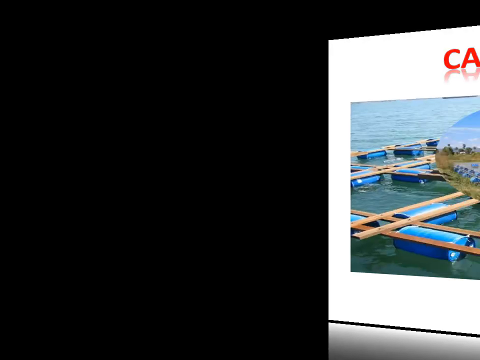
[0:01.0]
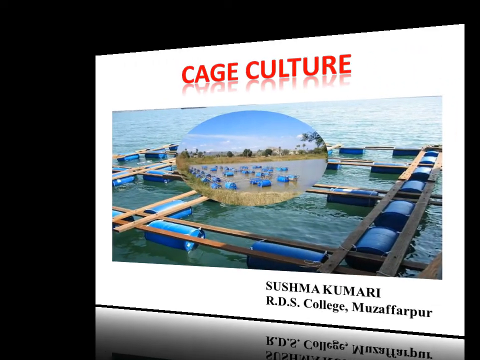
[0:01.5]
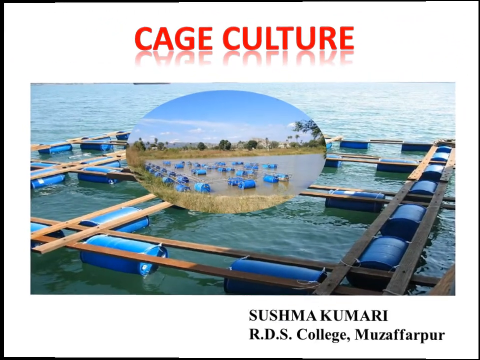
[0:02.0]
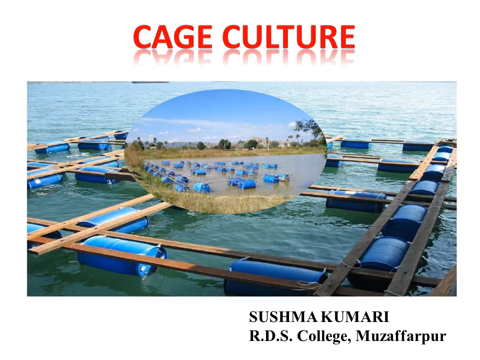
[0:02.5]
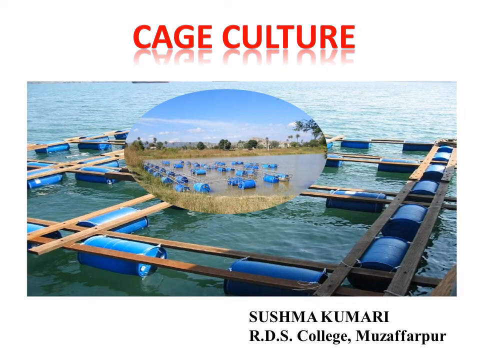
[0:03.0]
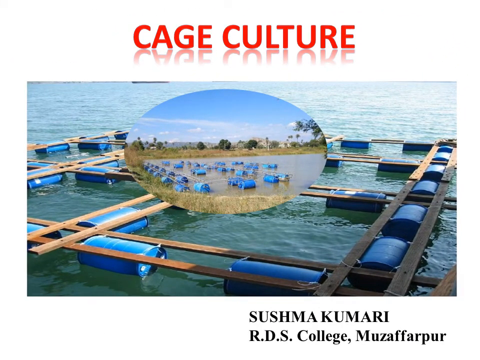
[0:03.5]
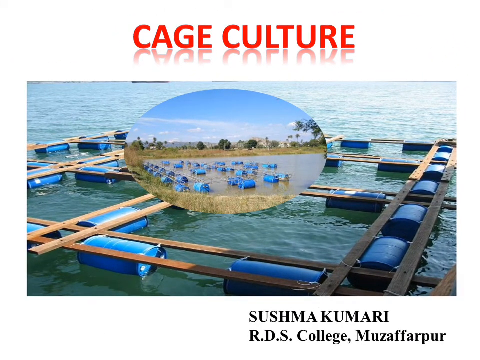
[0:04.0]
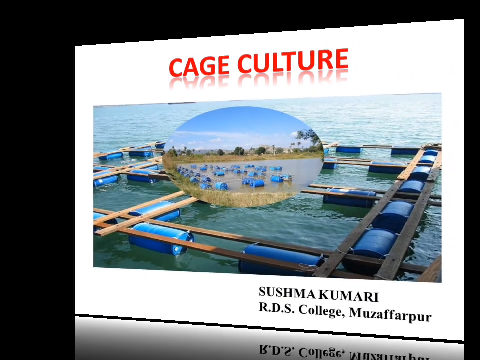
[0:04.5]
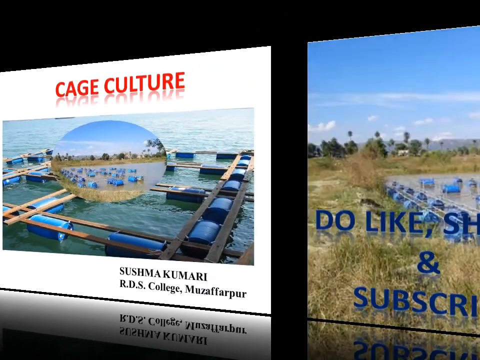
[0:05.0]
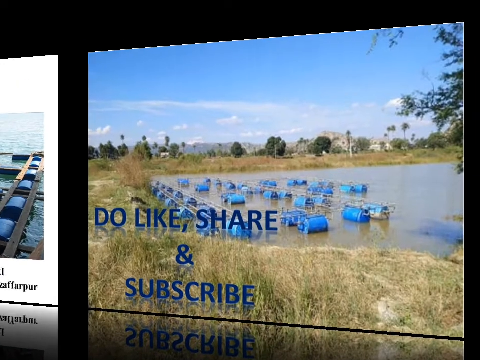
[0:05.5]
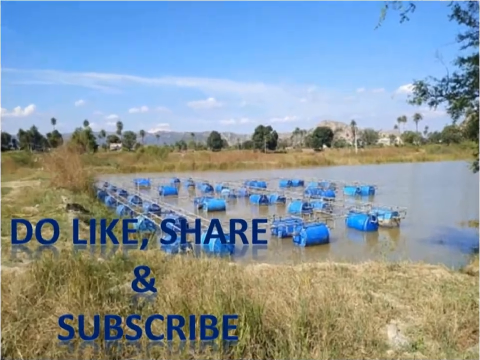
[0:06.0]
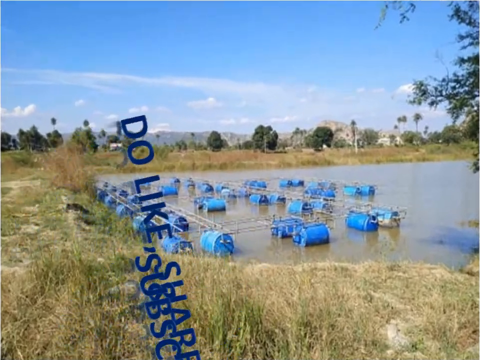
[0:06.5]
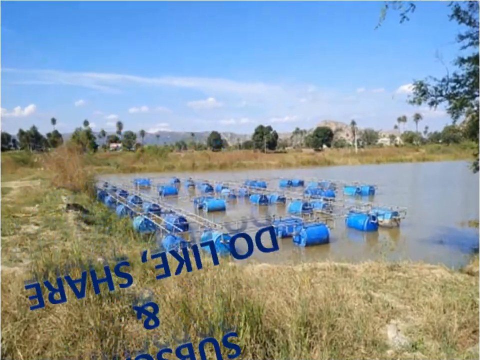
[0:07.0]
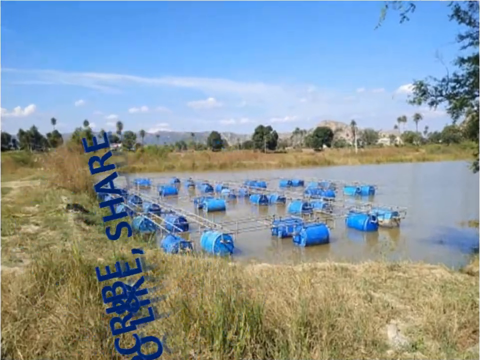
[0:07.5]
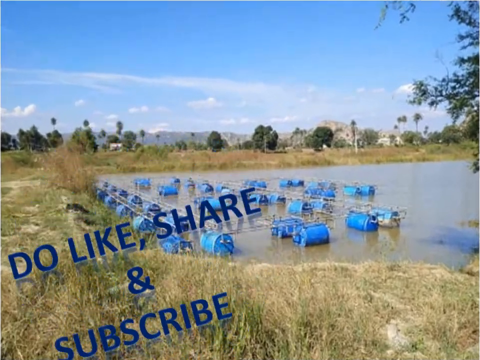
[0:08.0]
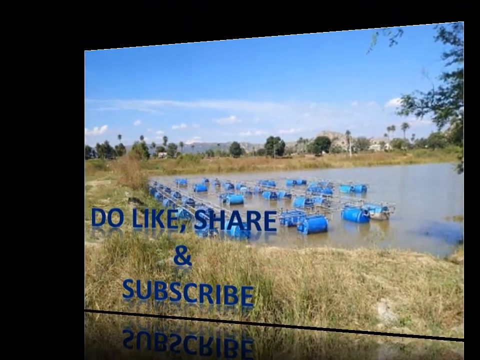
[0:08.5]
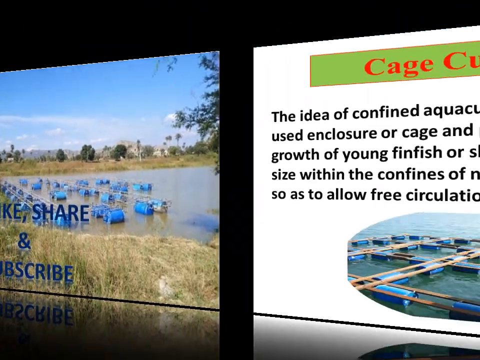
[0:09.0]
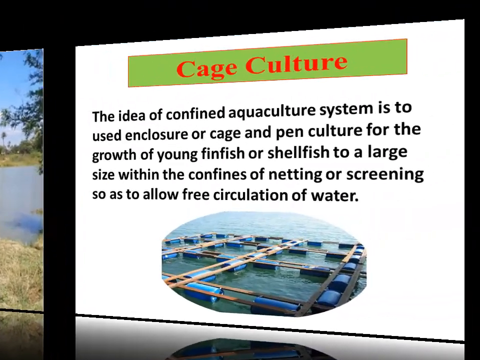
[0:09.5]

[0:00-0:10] An image shows a body of water on which various large blue drums or barrels, evidently filled with air, float. Arranged on top of them, in some sort of square grid, are planks on either side of the drums, forming a sort of walkway, with square open spaces in between. A name at the bottom of the image reads "Sushma Kumari, RDS College, Muzaffarpur." Next, another image of the body of water shows that it looks like it could be a lake or a large pond, surrounded on the embankment by some grass. Along one edge, the barrels float with pieces of planks across them as walkways. Writing on the left of the screen says "do like, share, and subscribe."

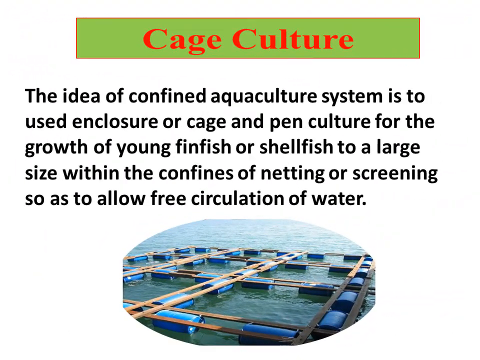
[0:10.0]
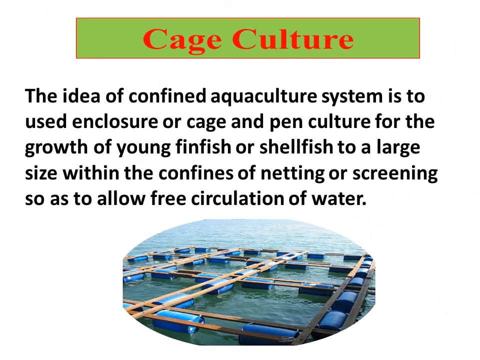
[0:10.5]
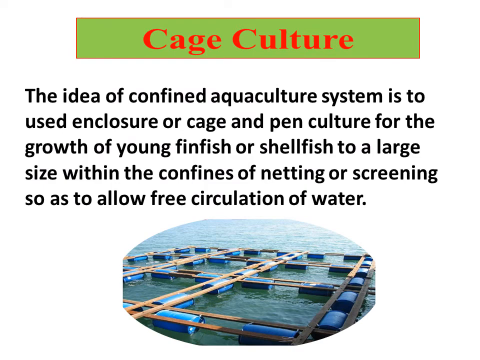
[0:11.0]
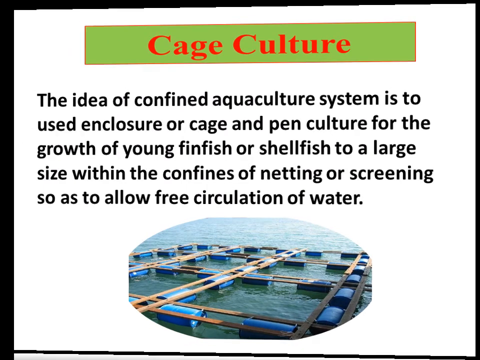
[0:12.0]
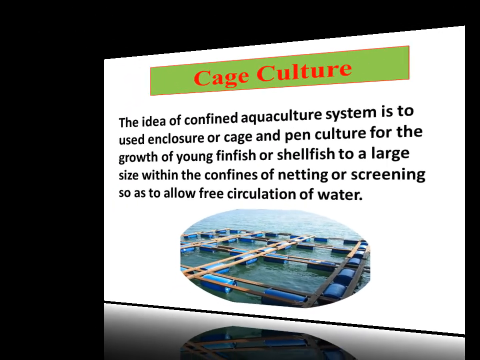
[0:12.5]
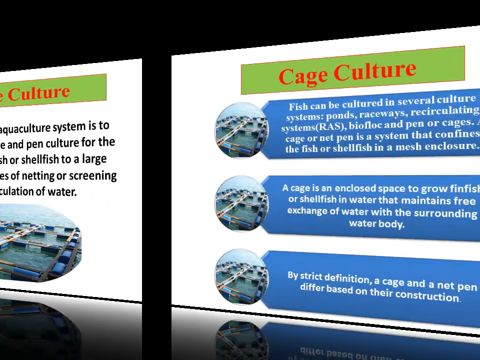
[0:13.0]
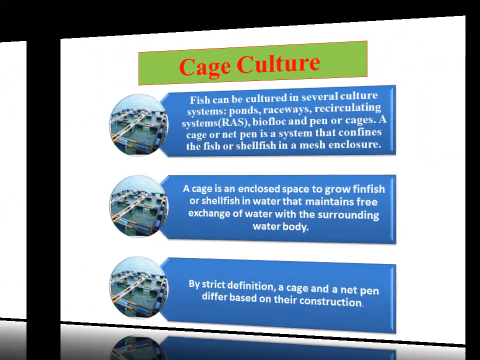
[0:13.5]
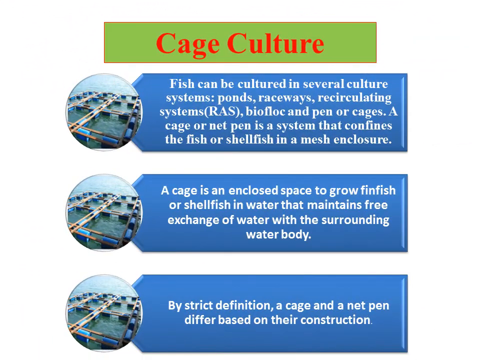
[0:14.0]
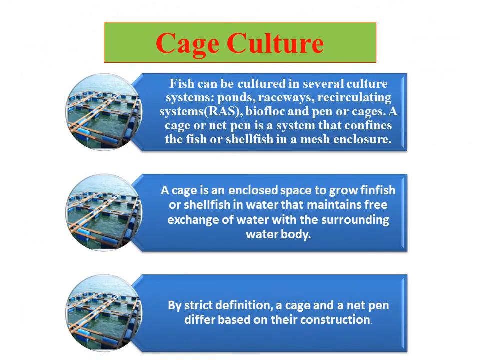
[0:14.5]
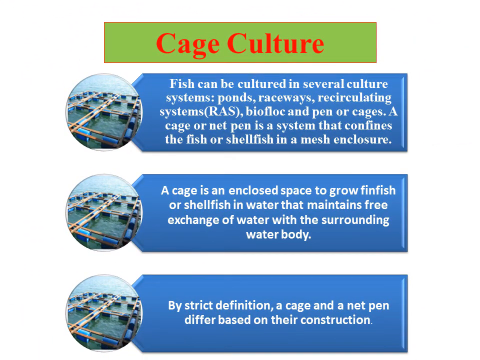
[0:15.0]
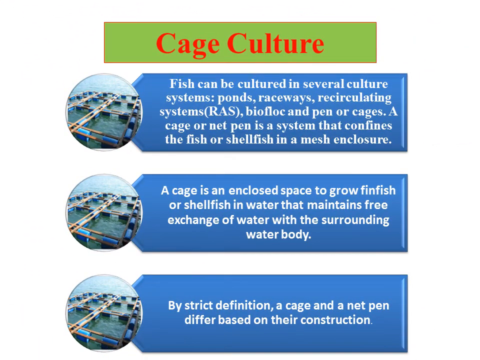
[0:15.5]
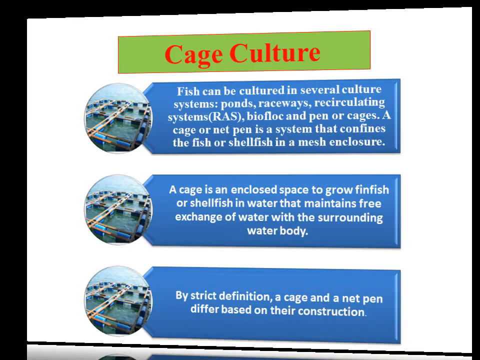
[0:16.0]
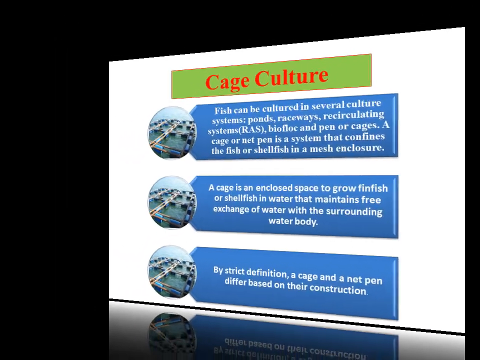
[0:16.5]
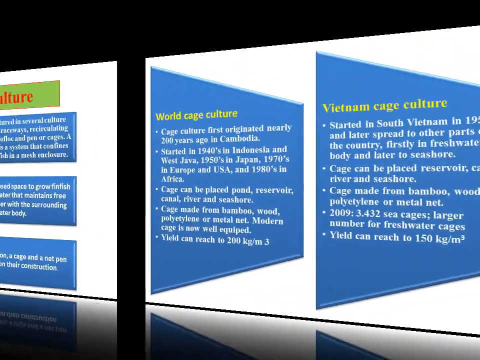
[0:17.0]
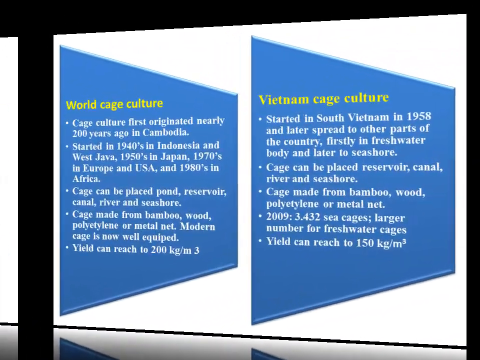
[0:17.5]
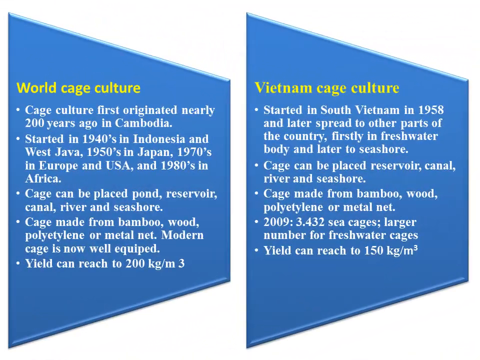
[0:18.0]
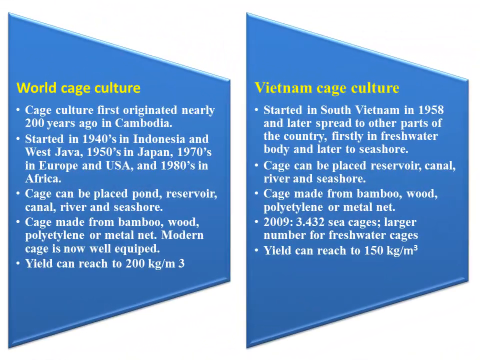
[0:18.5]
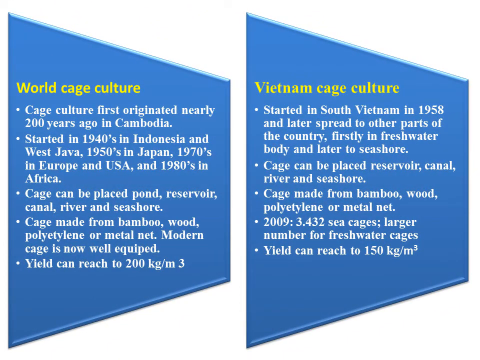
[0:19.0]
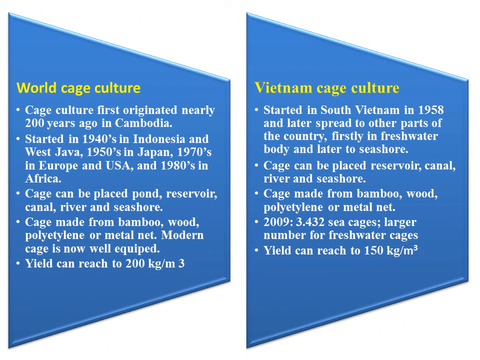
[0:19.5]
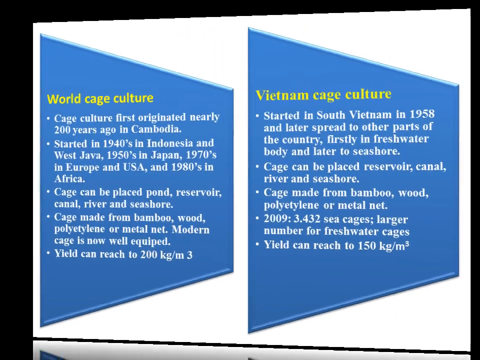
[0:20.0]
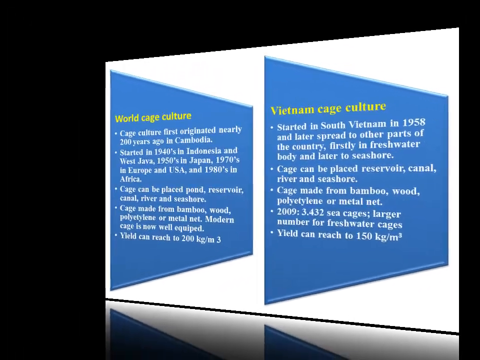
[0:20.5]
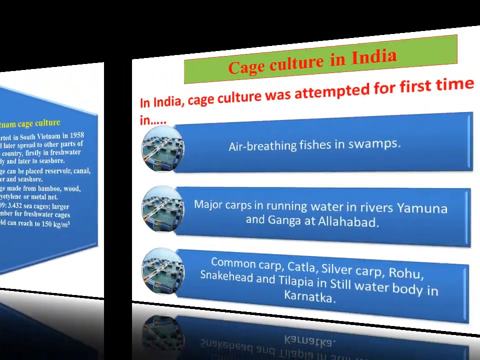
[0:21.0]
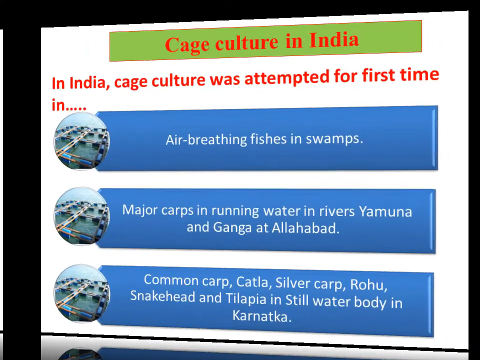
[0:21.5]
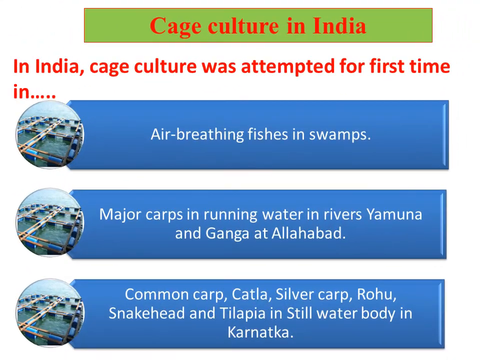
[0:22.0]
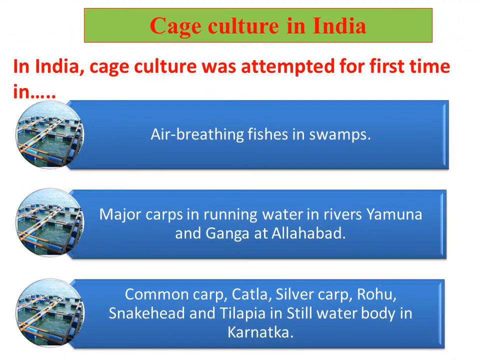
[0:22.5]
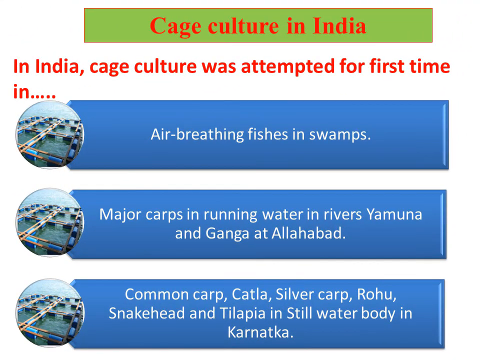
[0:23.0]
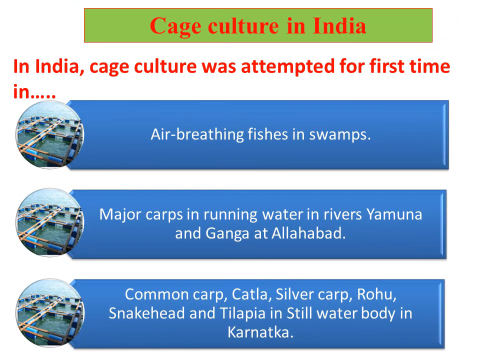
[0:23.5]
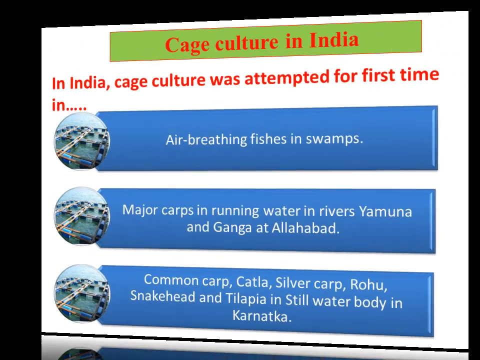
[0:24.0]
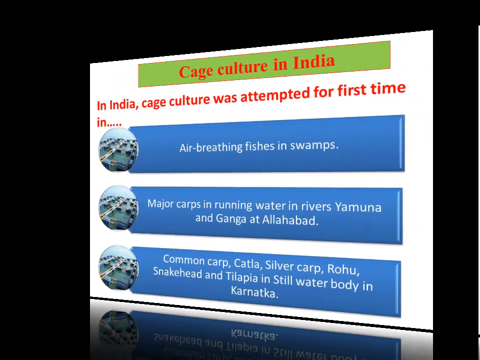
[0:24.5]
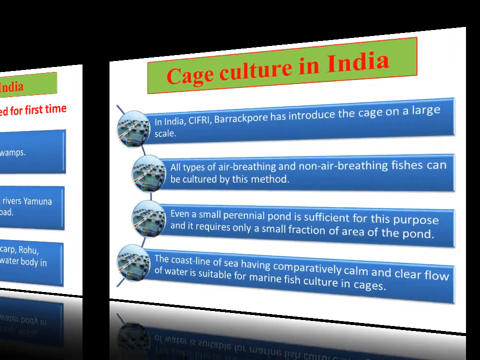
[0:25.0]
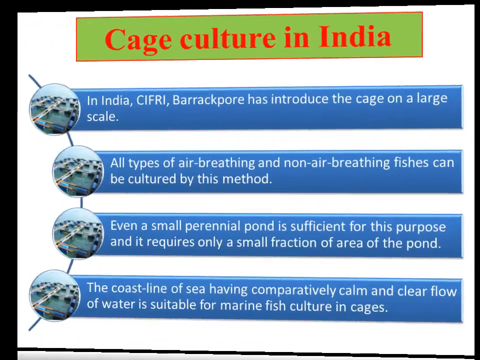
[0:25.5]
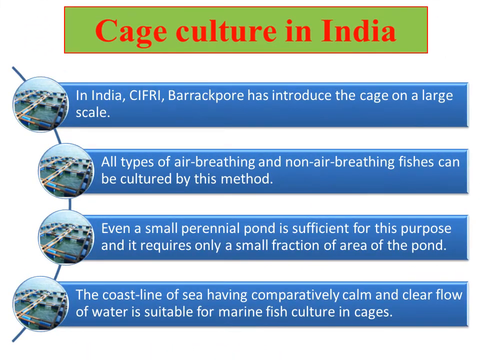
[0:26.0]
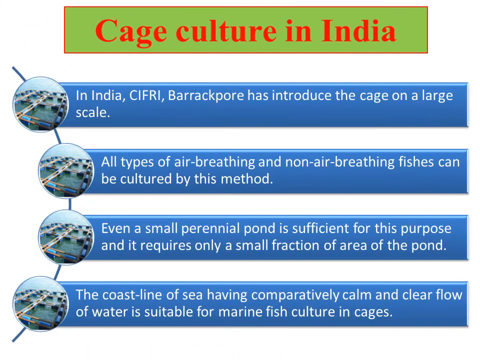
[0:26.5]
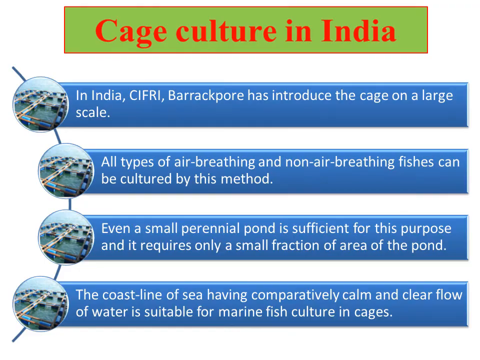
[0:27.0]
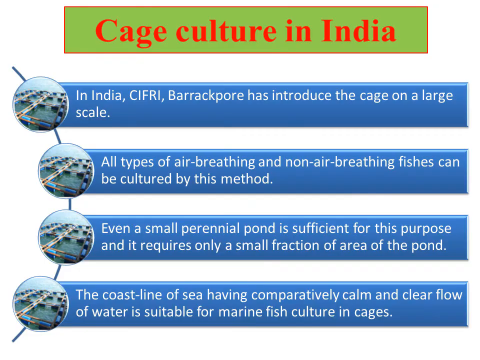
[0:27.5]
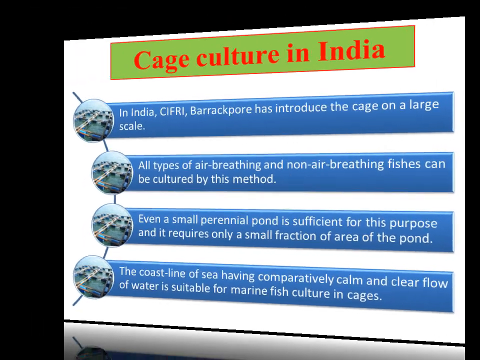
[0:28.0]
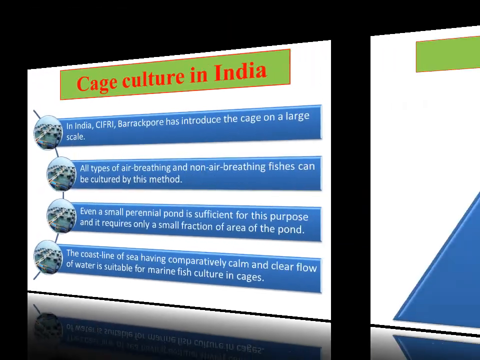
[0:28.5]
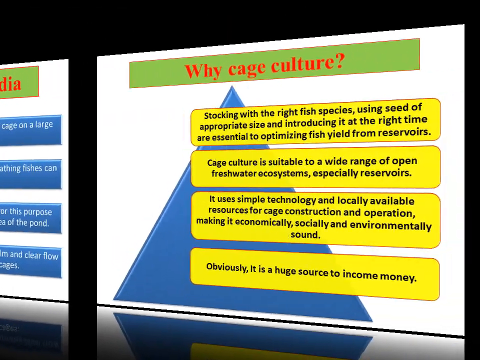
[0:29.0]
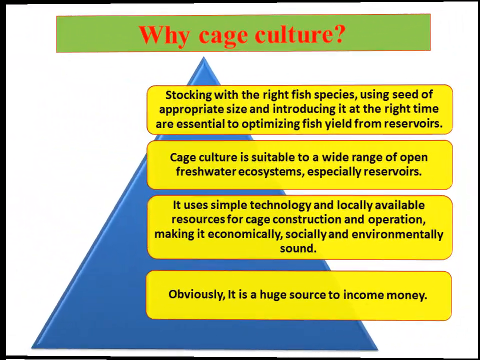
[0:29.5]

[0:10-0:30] Text explains that the idea of a confined aquaculture system is to use an enclosure, cage or pen culture to grow young fish to a large size within the confines of netting or screening so as to allow free circulation of water. A page then shows the different kinds of cage culture, giving definitions of cage culture and what it is about. Information on world cage culture follows, mentioning about 200 years ago in Cambodia, and it says it started in Vietnam from 1958; it seems to be quite popular in these two countries. Another slide covers cage culture in India, stating that all types of air-breathing or non-air-breathing fish can be cultured and that it is a way of making money where not a lot of output is needed as long as the right conditions exist. It is probably an easier and cheaper way of fishing and making money.